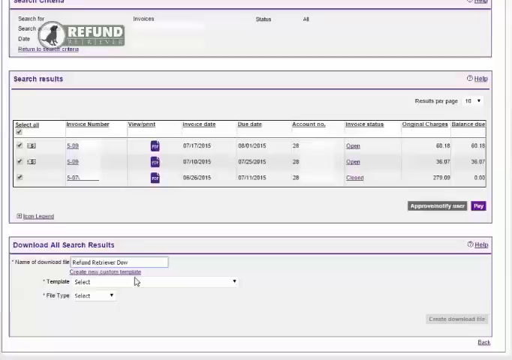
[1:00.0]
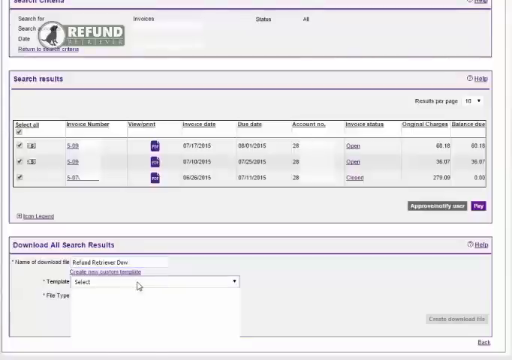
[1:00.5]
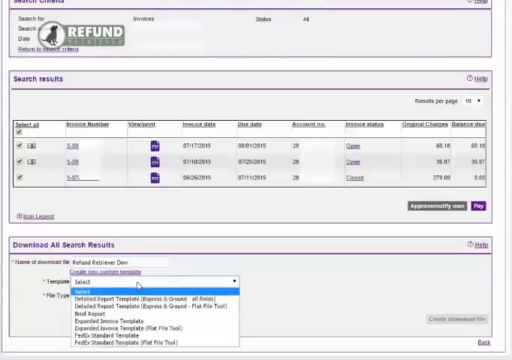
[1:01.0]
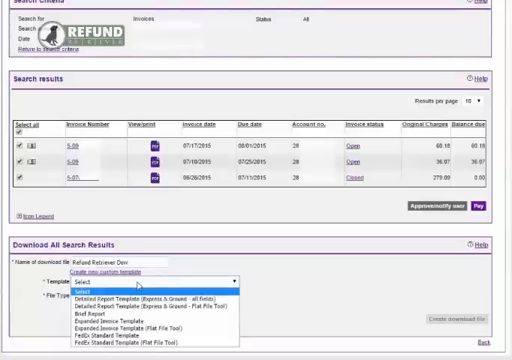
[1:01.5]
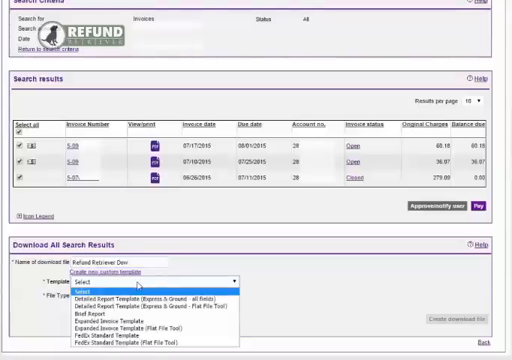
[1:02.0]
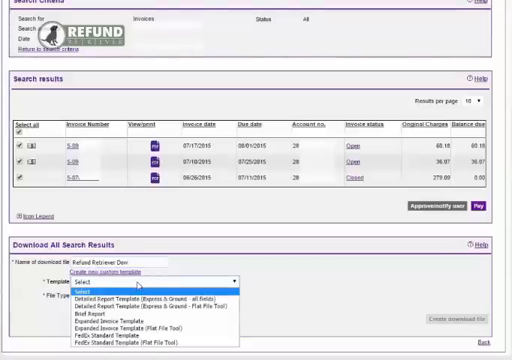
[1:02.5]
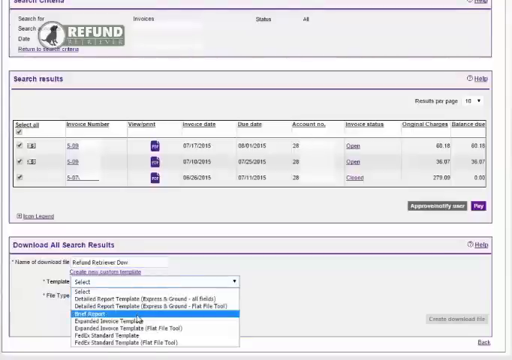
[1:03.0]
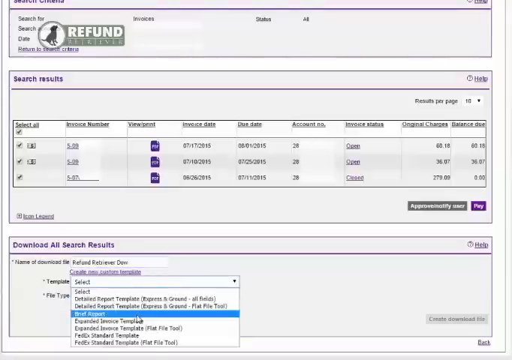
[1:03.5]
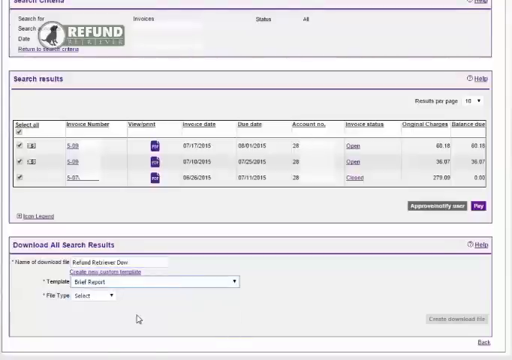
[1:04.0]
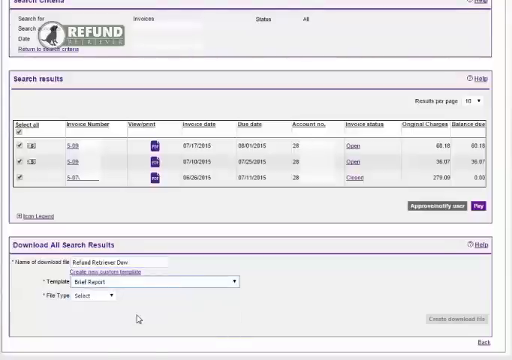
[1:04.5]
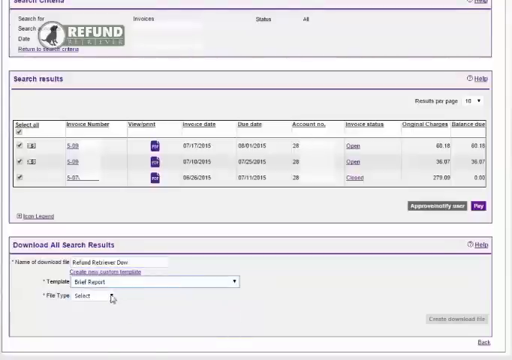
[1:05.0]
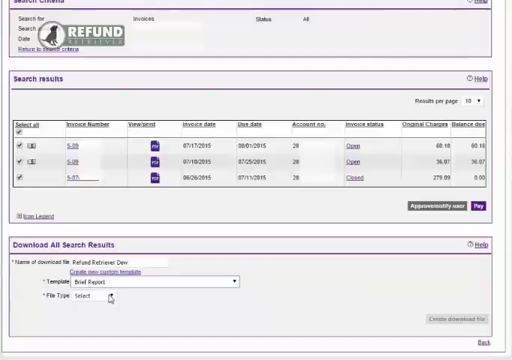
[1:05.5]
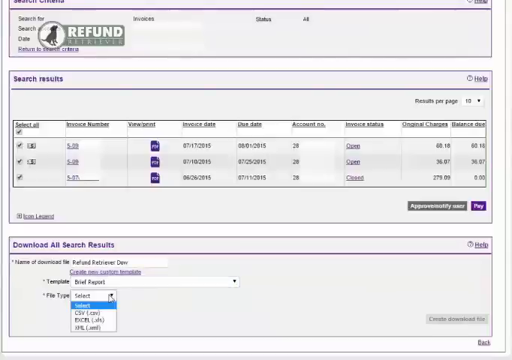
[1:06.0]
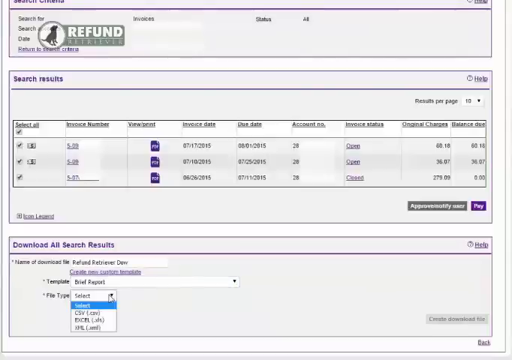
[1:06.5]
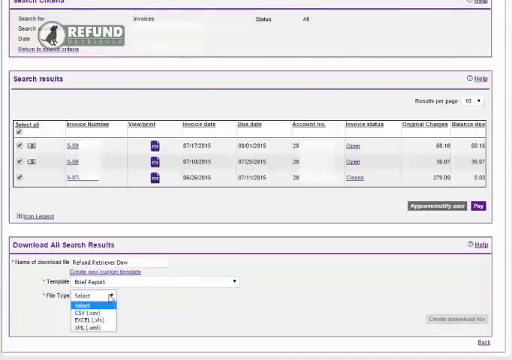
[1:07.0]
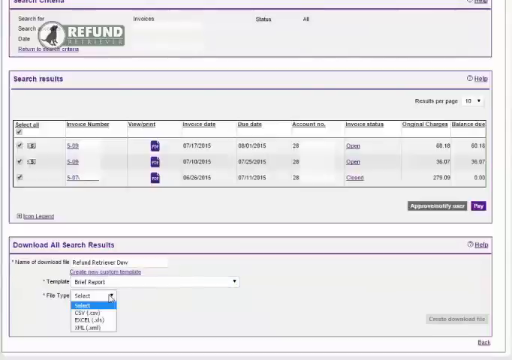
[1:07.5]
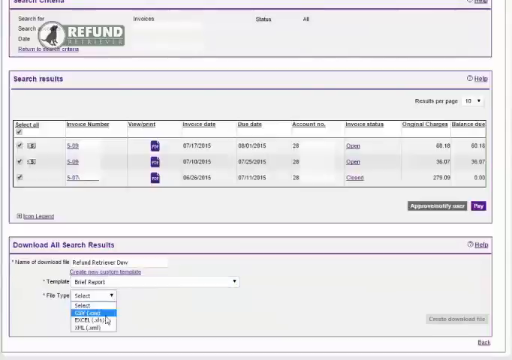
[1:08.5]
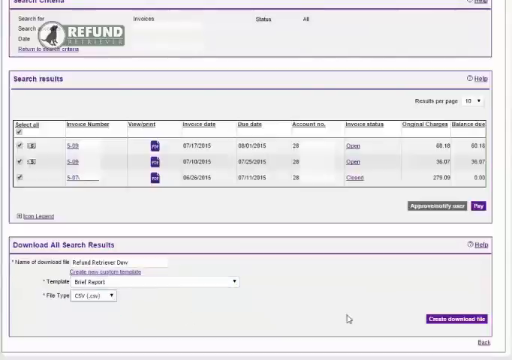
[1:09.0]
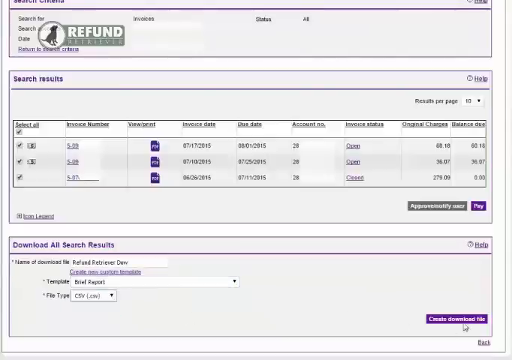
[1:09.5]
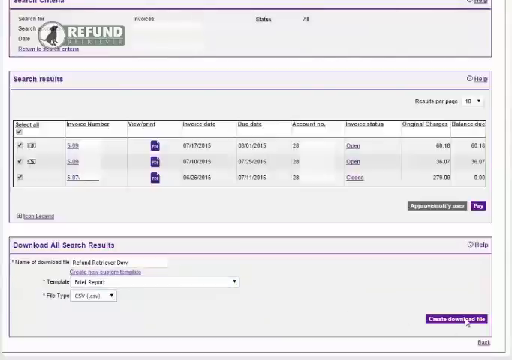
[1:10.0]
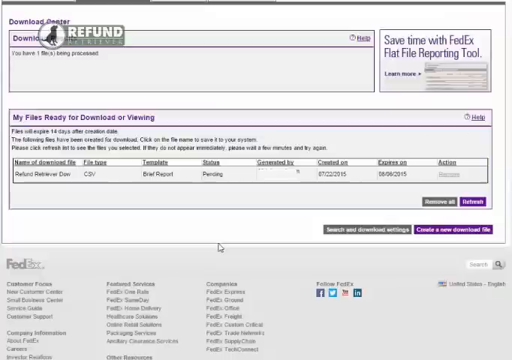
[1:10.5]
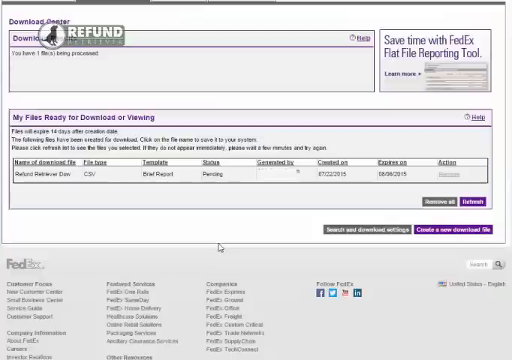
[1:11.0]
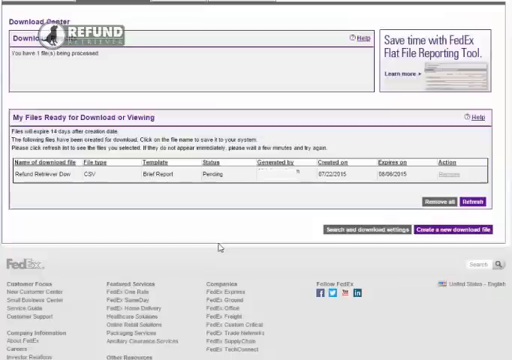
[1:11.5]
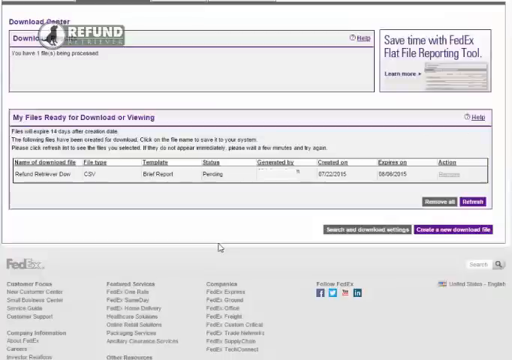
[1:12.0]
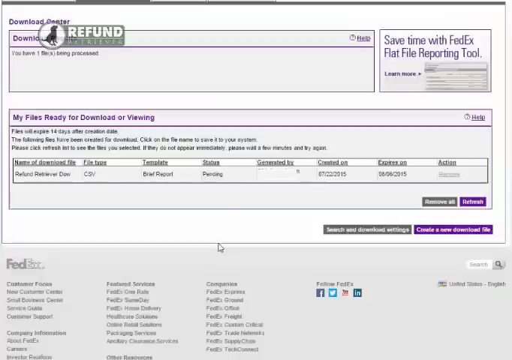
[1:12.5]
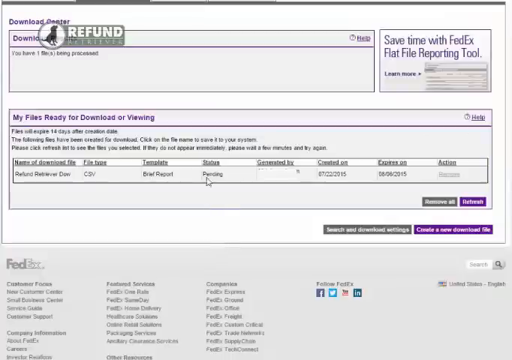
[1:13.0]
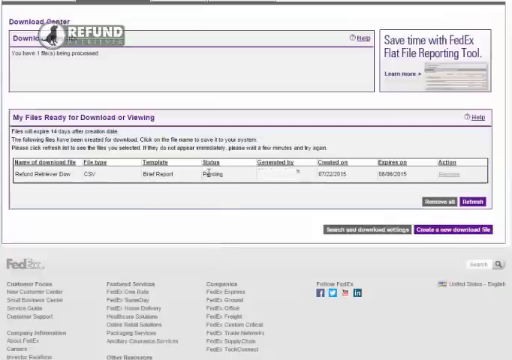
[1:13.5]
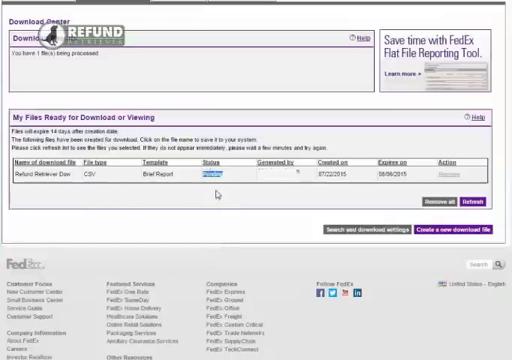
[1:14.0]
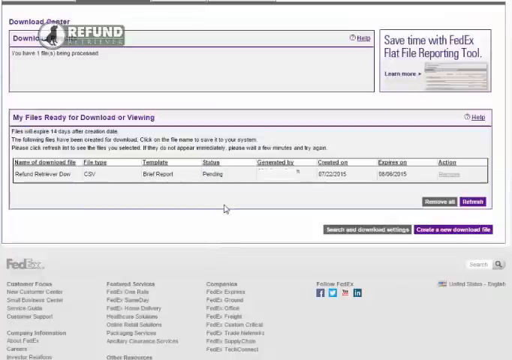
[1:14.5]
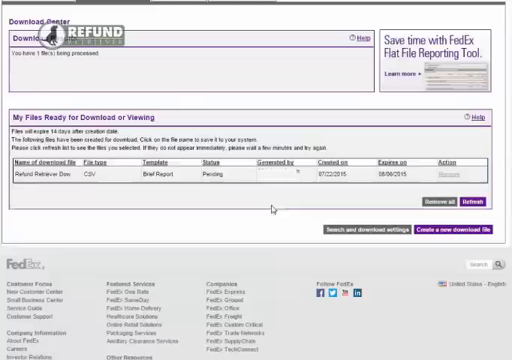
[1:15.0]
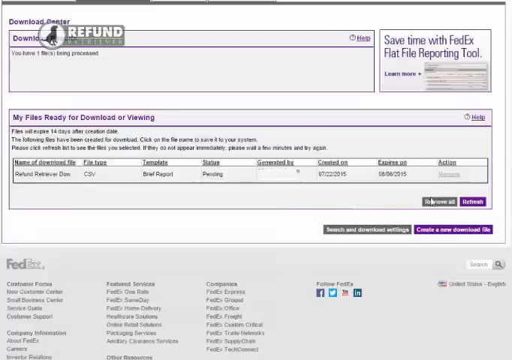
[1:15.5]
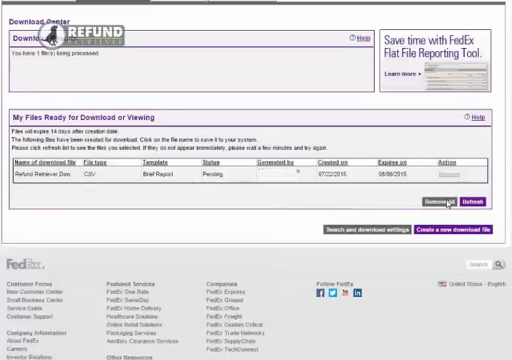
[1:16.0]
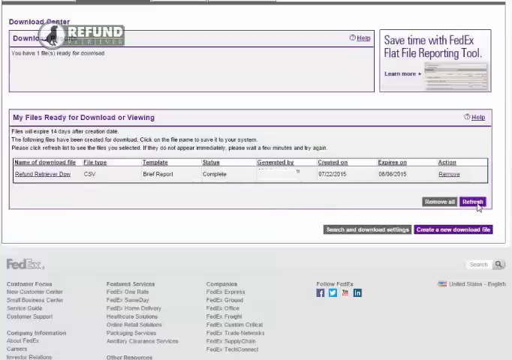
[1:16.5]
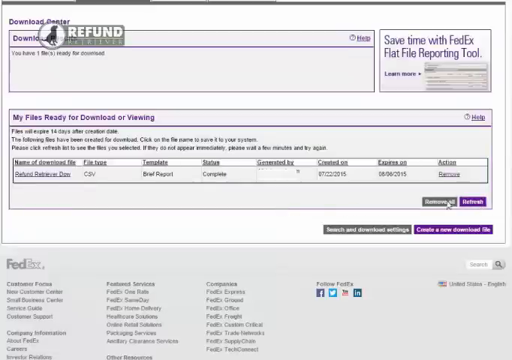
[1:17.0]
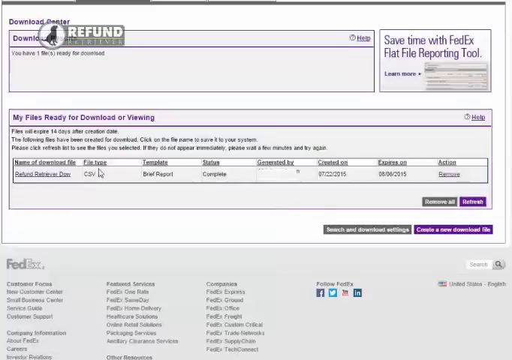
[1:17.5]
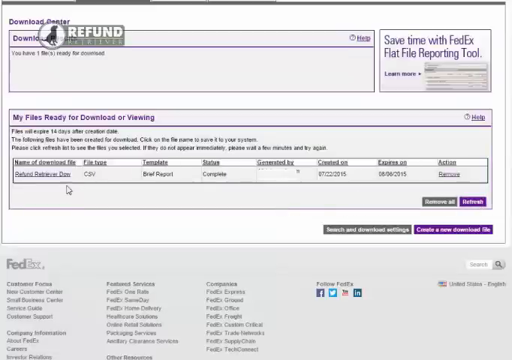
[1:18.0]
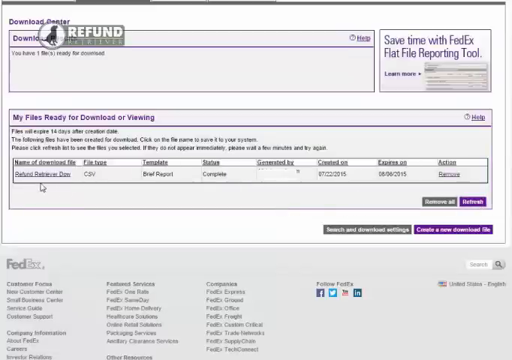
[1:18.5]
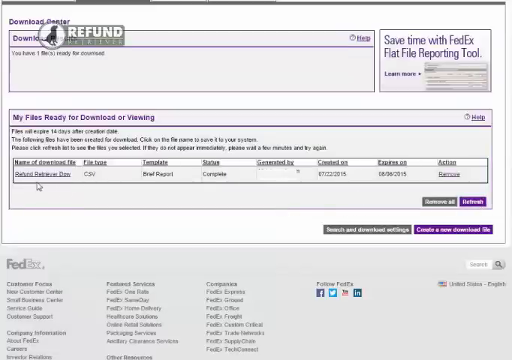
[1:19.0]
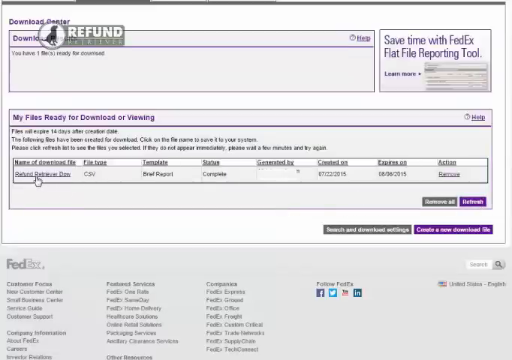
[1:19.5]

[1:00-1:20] On a website, a person has clicked on a drop-down menu, showing a bunch of options, and the area where the cursor points is highlighted in blue. They select an option and the menu disappears. Underneath is another drop-down menu labeled "file type" in black text on the left side; the cursor again produces a blue highlighted area, one of the options is selected, and the menu disappears. The person then navigates to another page and places the cursor over text that says "pending," with black text above it that says "status." The cursor moves to the right, where there is a purple button that says "refresh" in white text, then moves to the left and seems to point at some purple text. They click on it, and it navigates to another window.